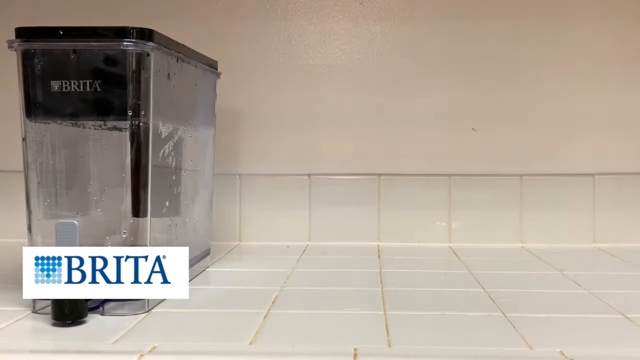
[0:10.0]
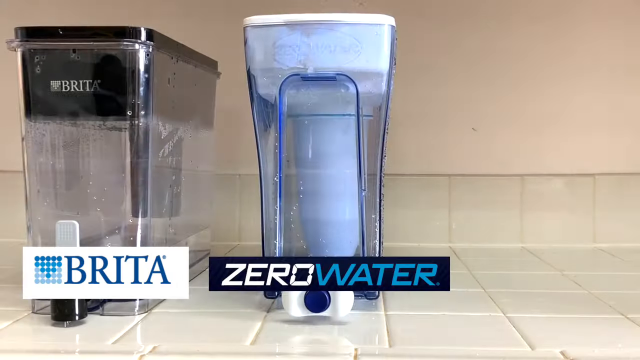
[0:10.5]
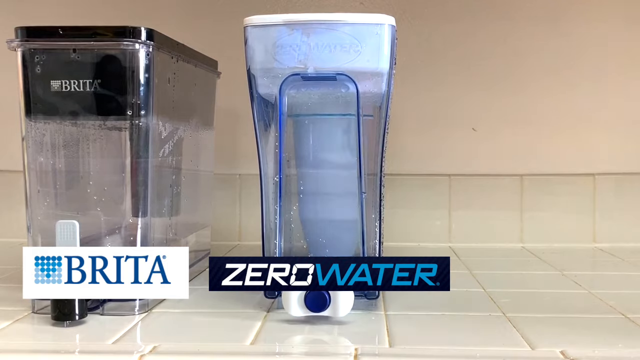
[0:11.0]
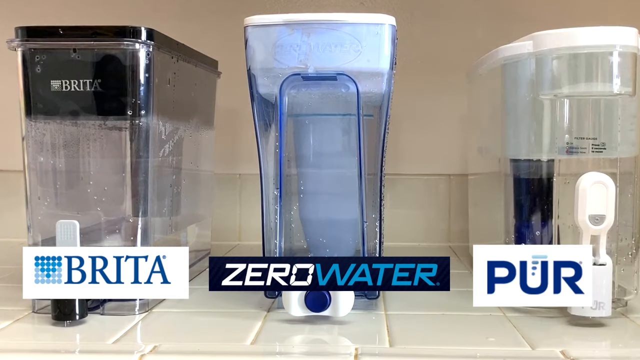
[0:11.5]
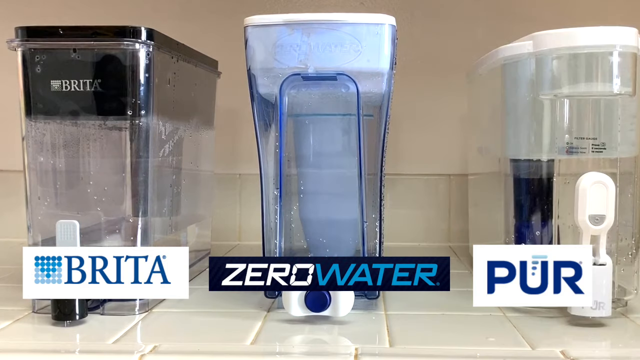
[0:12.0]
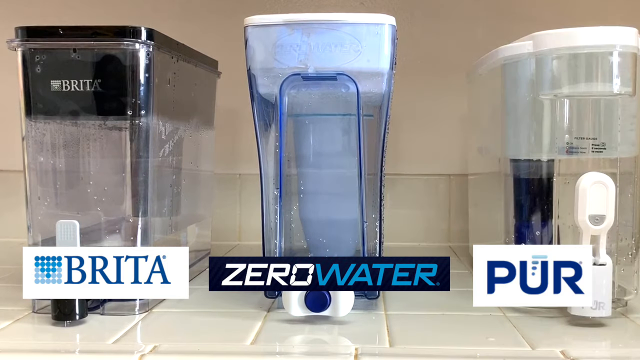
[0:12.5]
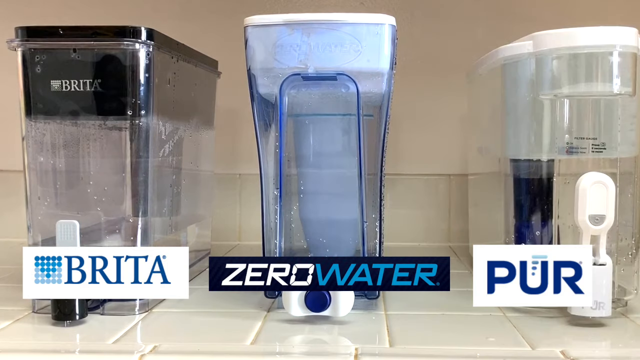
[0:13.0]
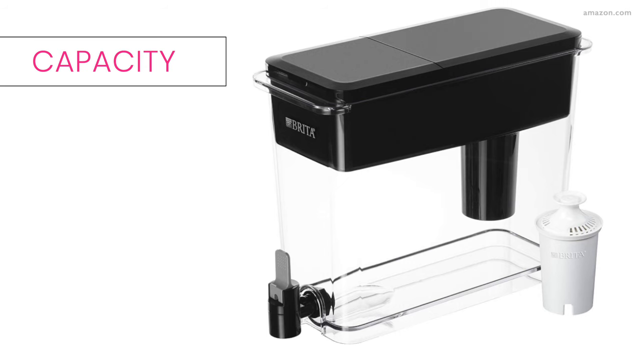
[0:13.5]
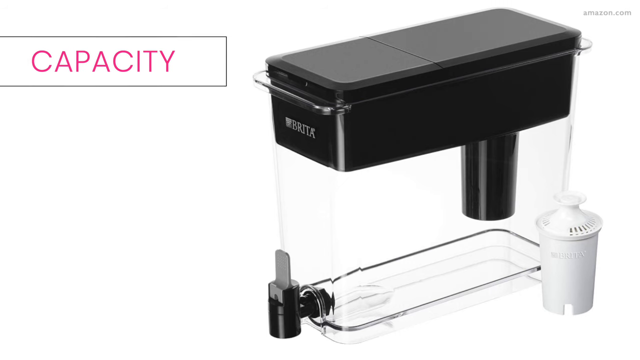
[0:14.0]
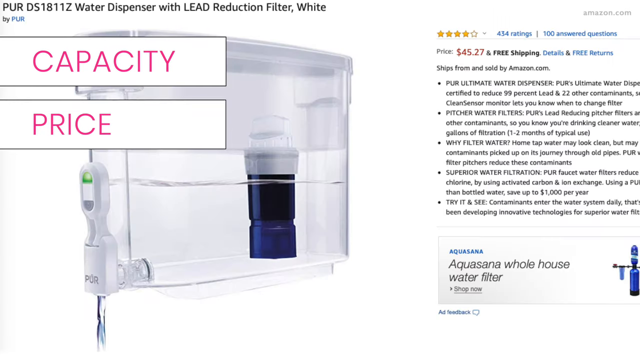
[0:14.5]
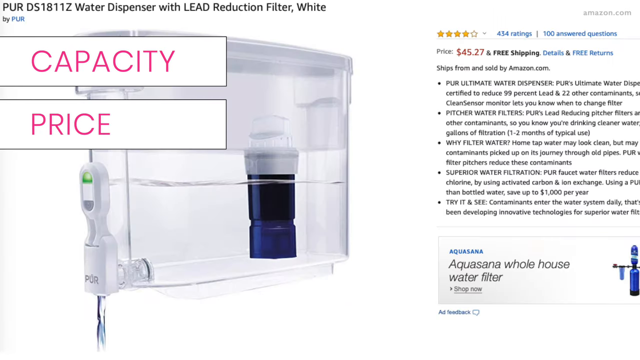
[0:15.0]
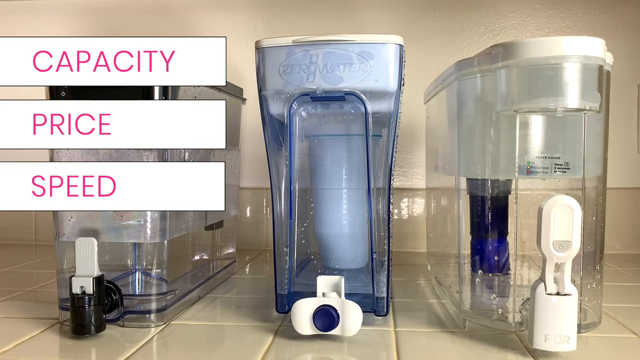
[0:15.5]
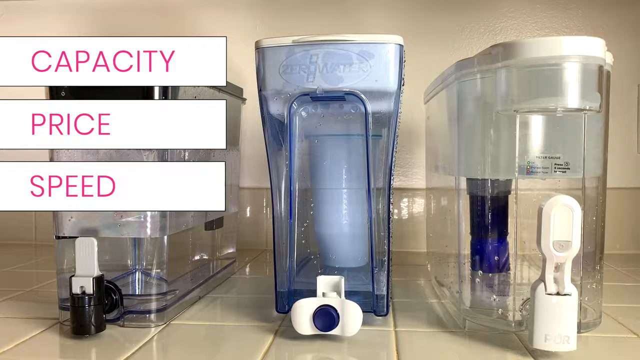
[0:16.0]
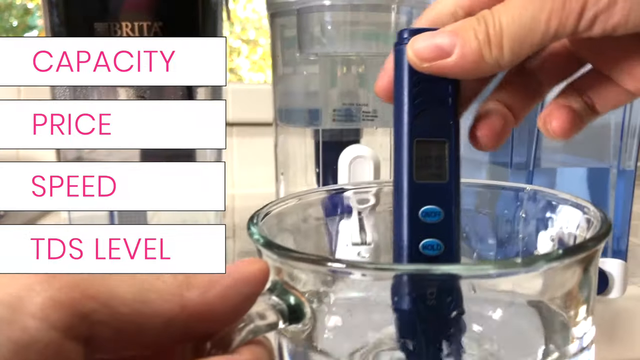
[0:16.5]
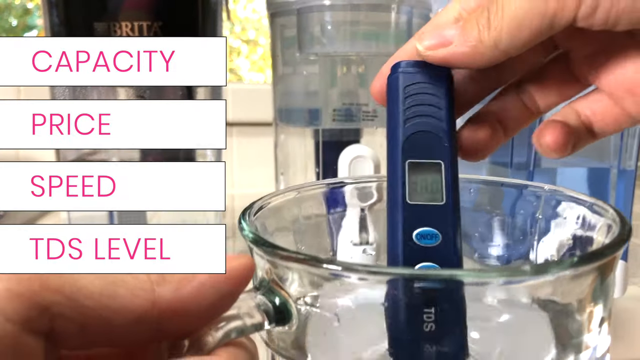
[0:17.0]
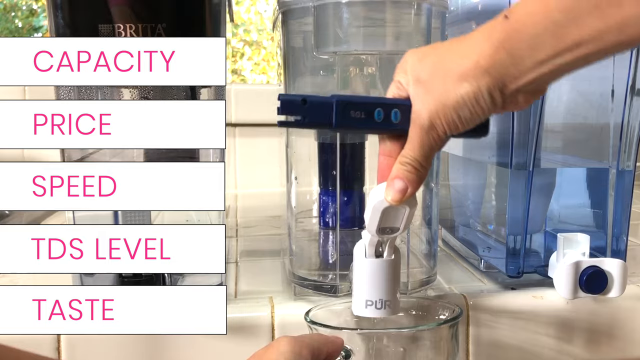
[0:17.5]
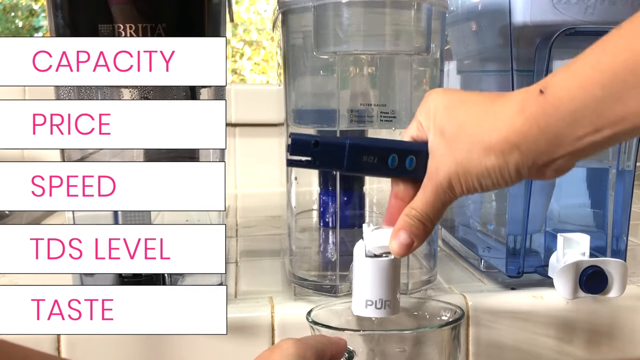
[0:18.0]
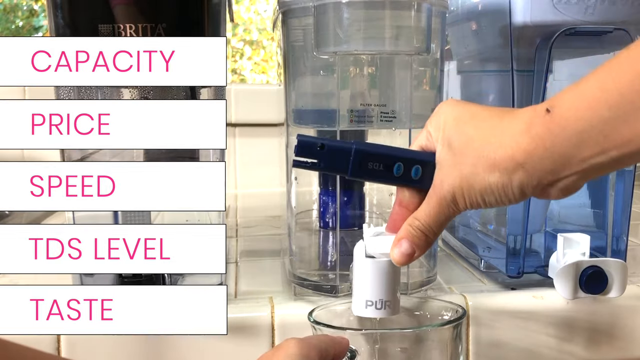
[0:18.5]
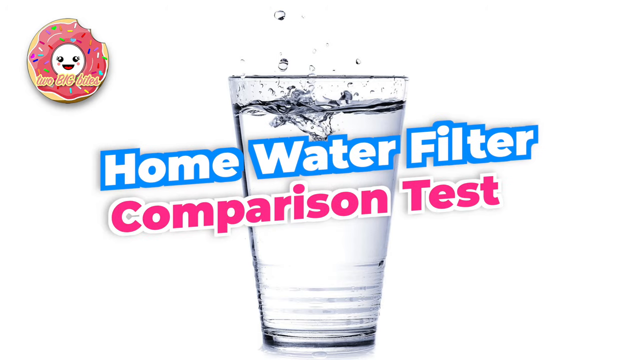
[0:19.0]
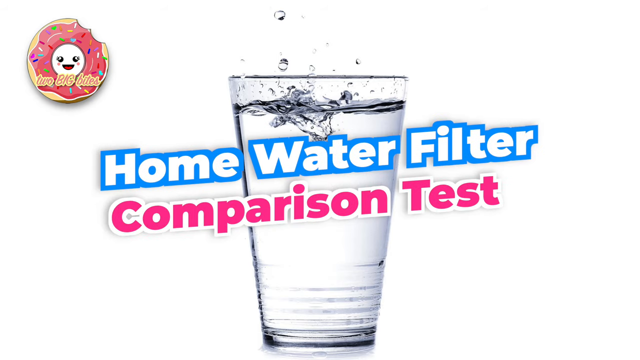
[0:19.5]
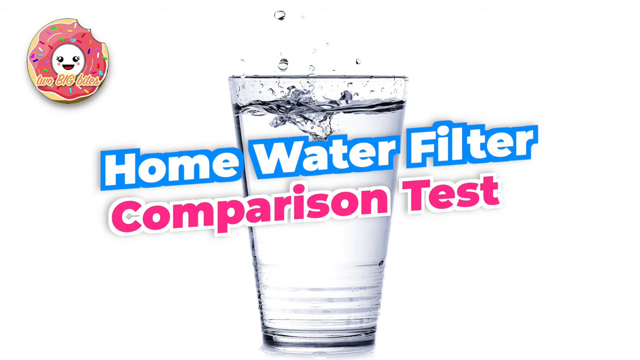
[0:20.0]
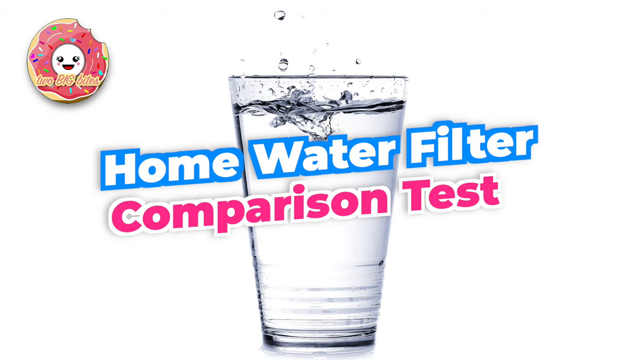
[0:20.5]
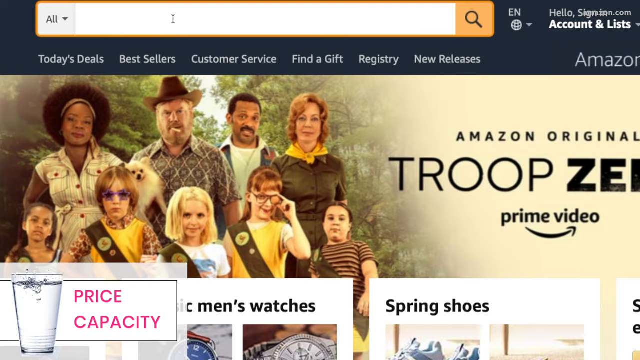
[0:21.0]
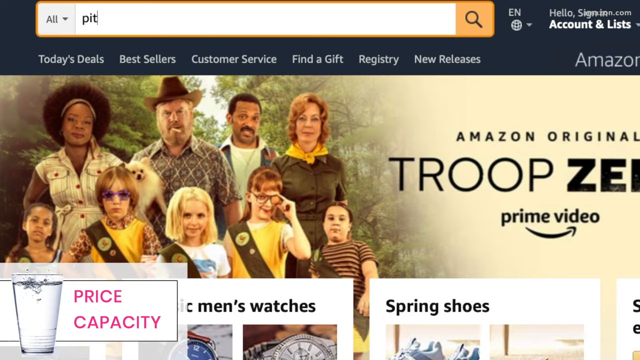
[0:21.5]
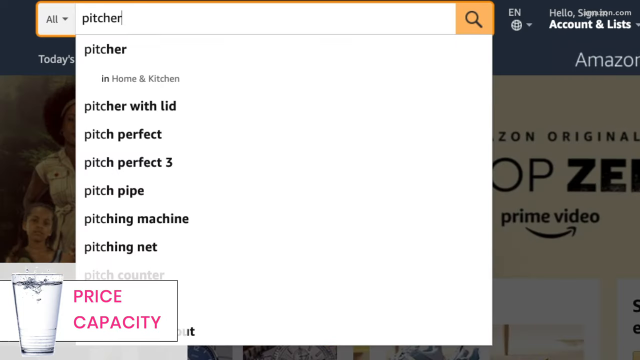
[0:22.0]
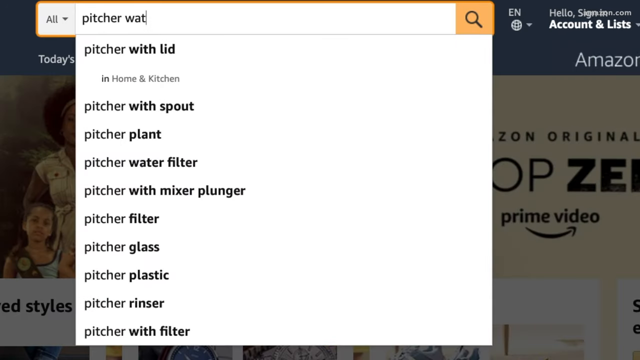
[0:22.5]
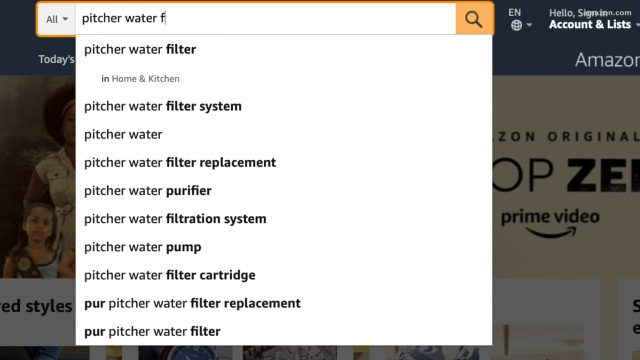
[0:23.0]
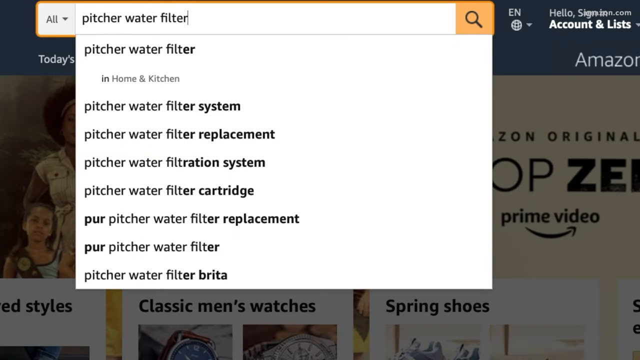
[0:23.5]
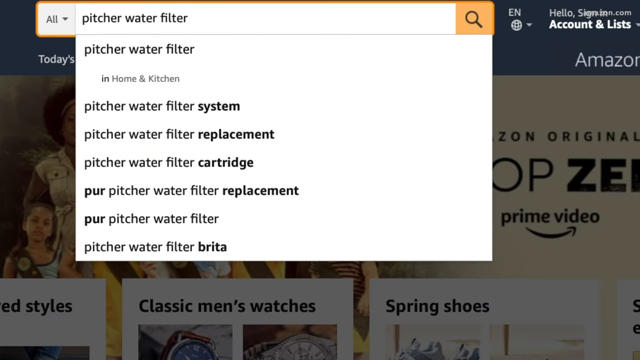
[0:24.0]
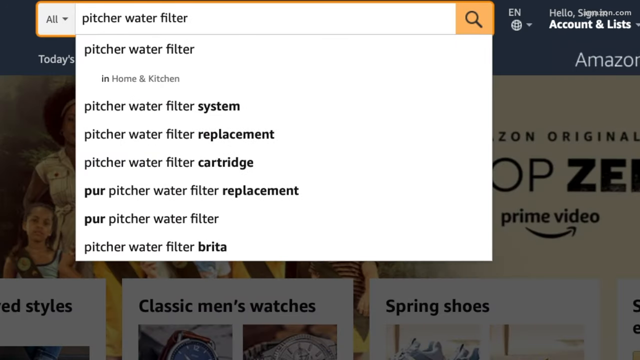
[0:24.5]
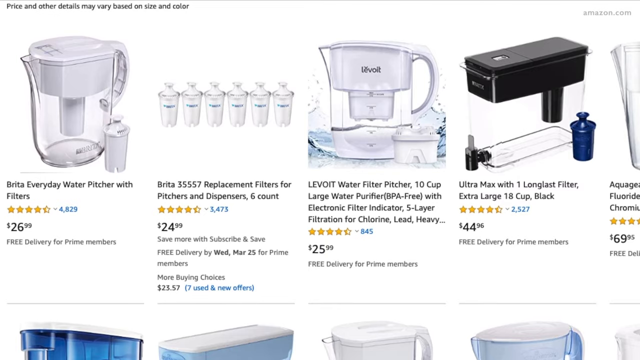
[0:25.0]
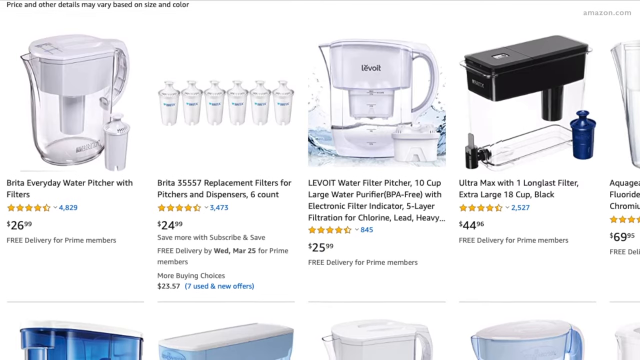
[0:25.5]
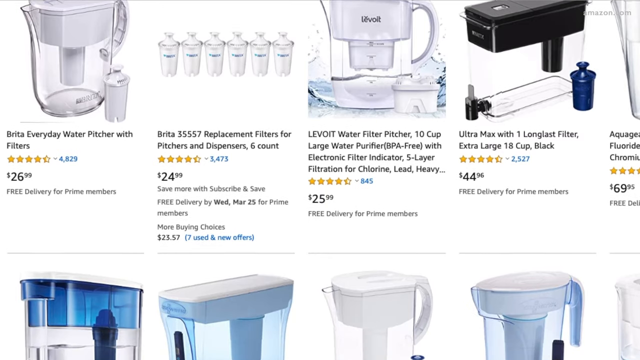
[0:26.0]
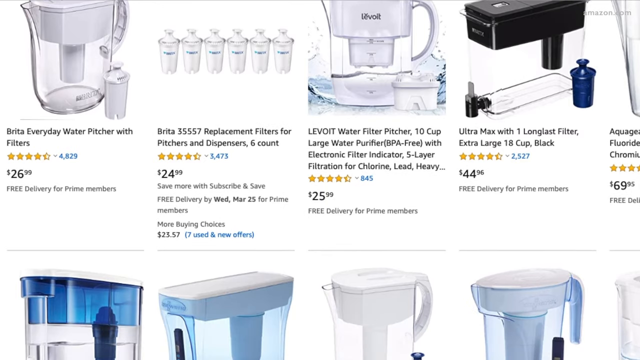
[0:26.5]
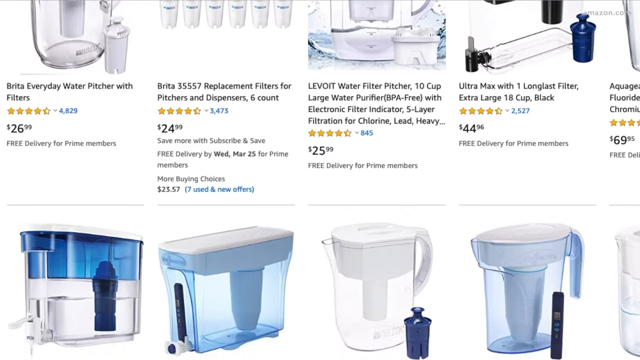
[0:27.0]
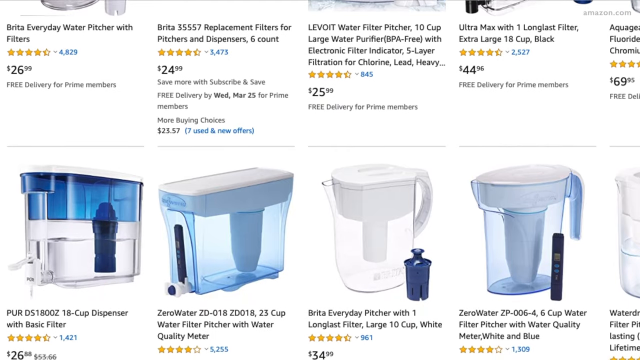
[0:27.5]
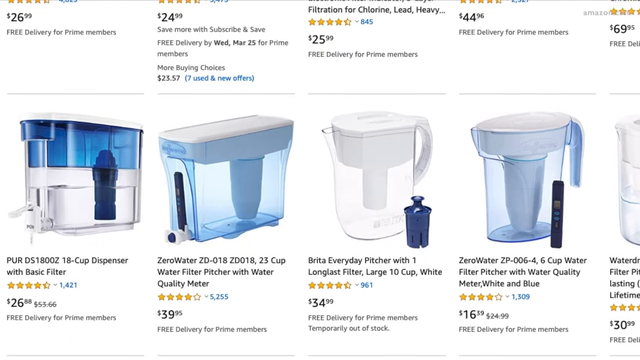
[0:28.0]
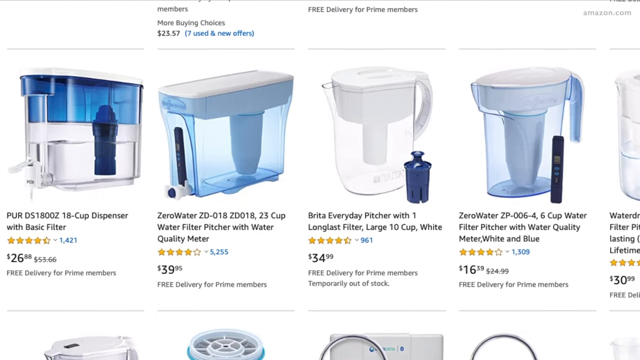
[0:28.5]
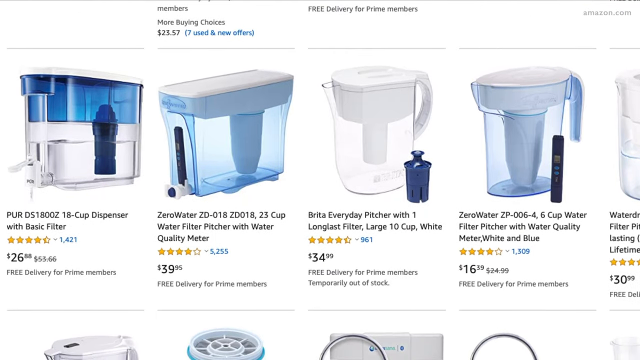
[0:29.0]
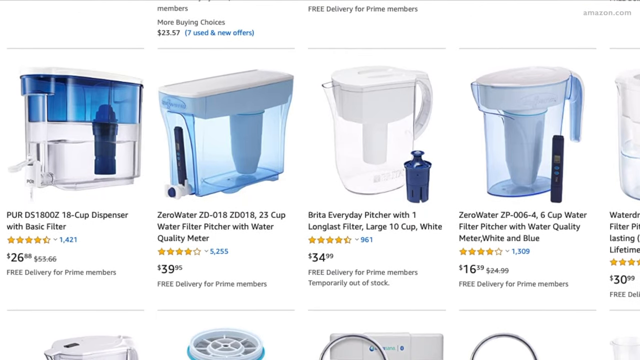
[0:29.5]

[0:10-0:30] A person puts three filters on the counter: a black filter from Brita, a longer white filter from Zero Water, and a shorter white filter from Purr. A quick flash is shown between two of the three filters, Brita and Purr. The person appears to test the filters across different categories: capacity, price, speed, TDS levels, and taste, which are the categories used to compare the three filters. The person then types "pure water filter" into the Amazon search engine and slowly scrolls down to look at each water filter's price. The person pulls up the Brita water filter that was originally on the counter to compare its price on the Amazon app. Afterward, a quick flash is shown between the Brita and Purr filters.